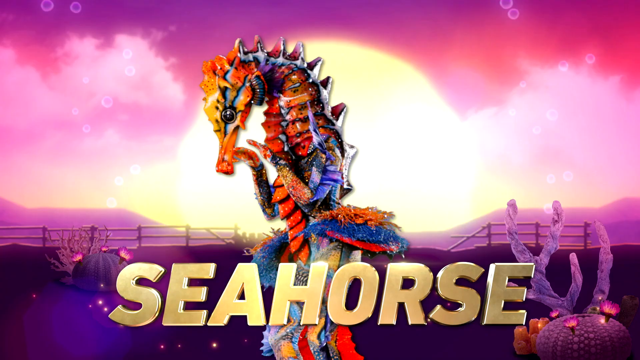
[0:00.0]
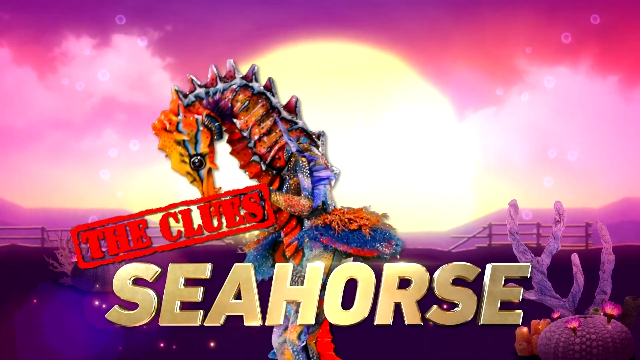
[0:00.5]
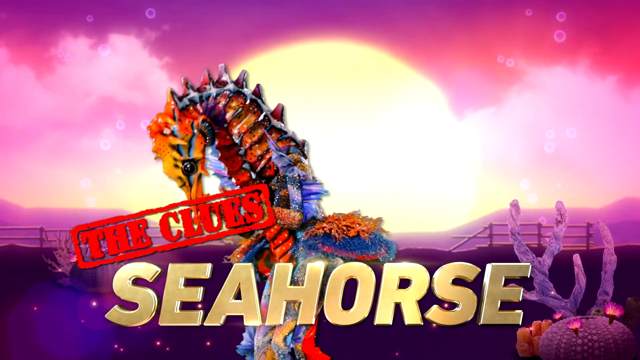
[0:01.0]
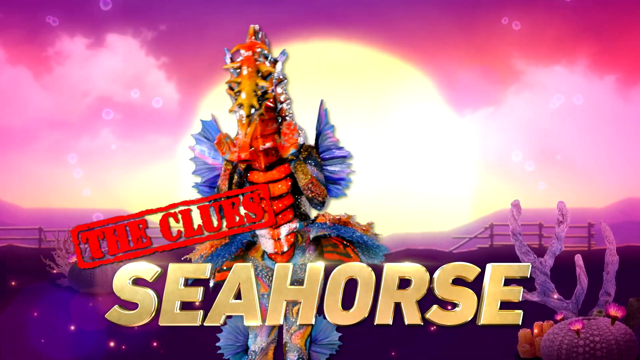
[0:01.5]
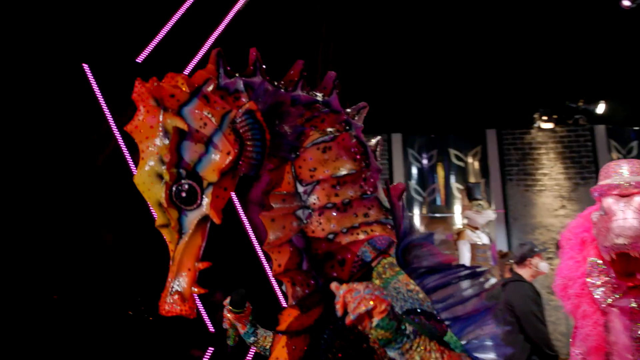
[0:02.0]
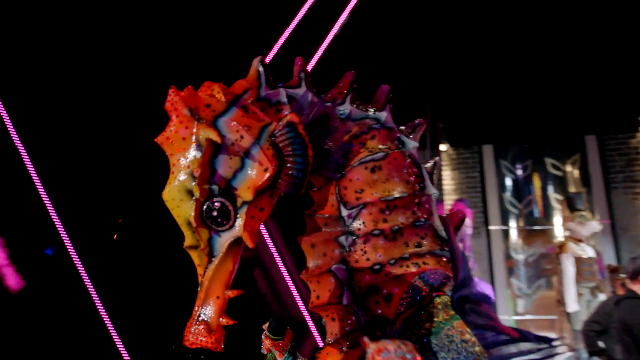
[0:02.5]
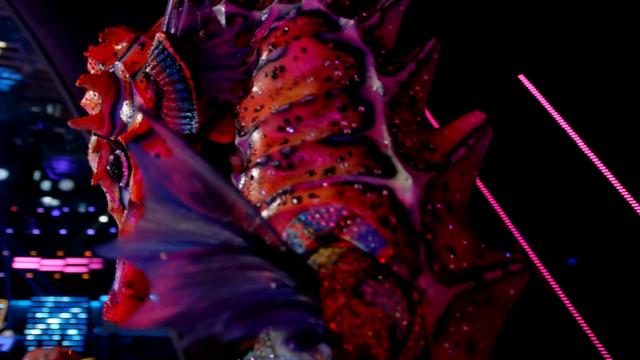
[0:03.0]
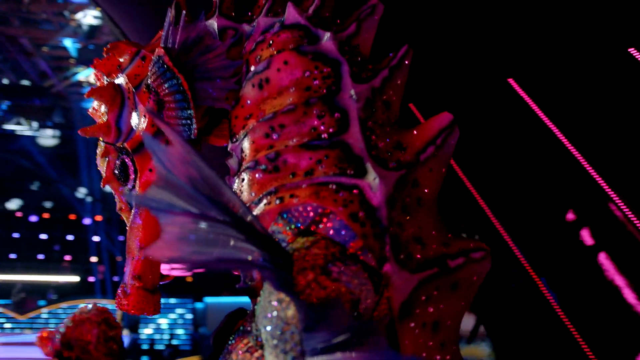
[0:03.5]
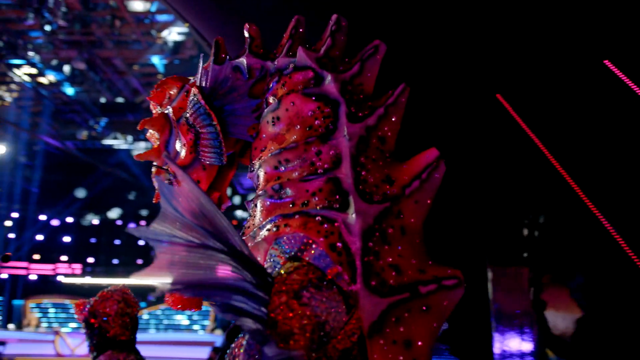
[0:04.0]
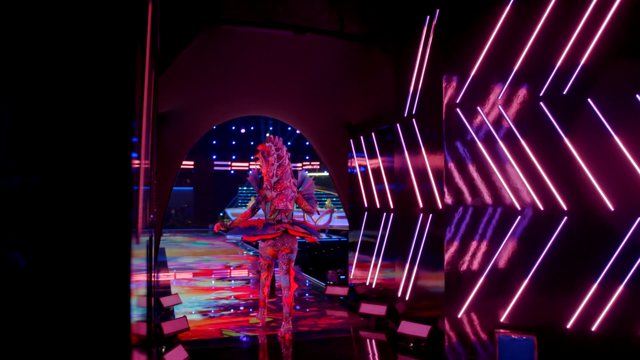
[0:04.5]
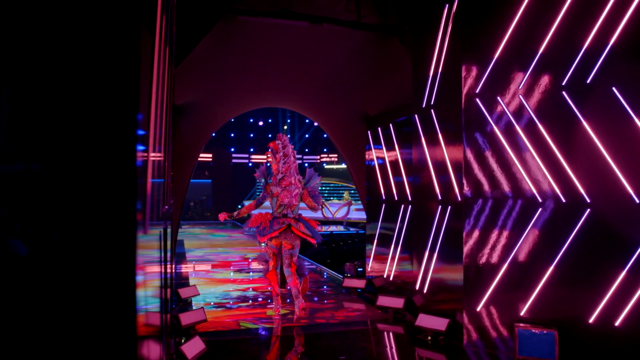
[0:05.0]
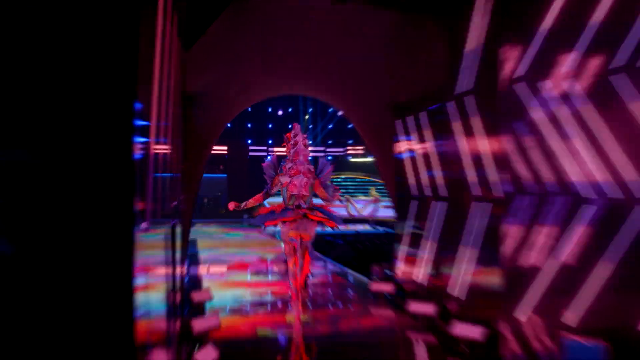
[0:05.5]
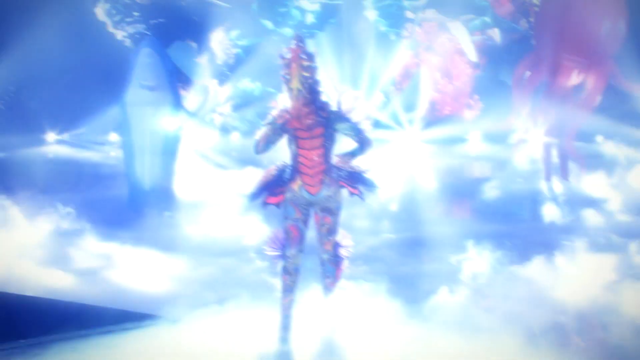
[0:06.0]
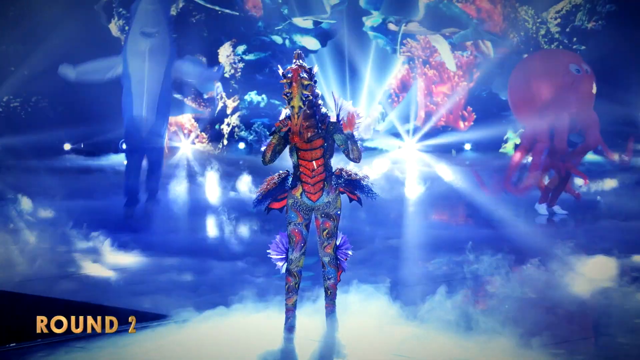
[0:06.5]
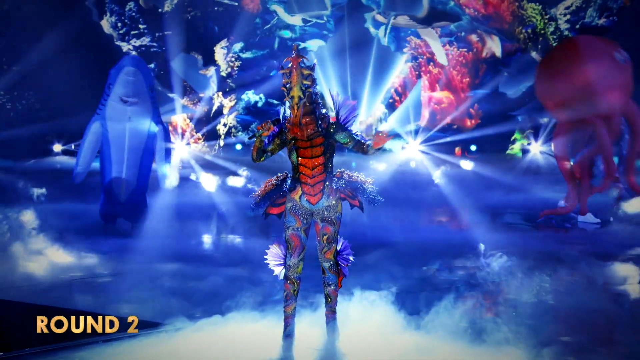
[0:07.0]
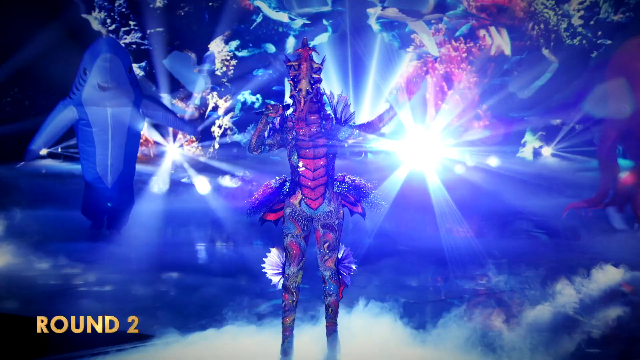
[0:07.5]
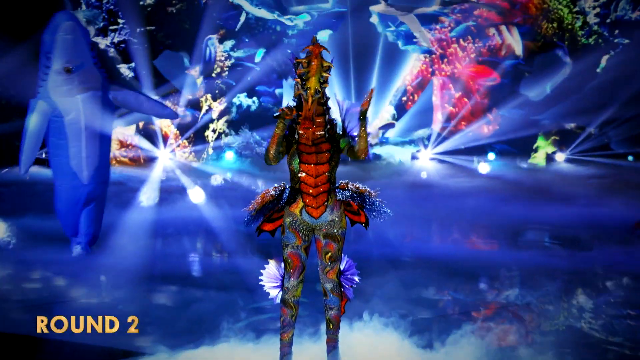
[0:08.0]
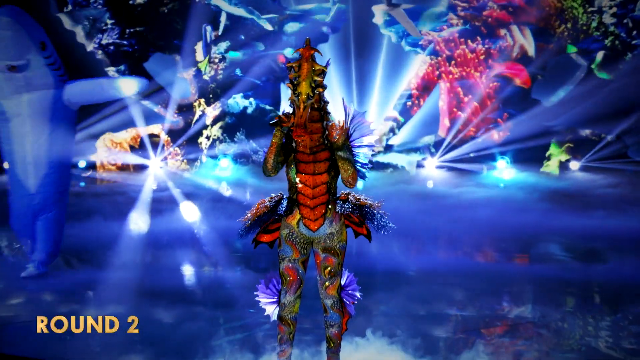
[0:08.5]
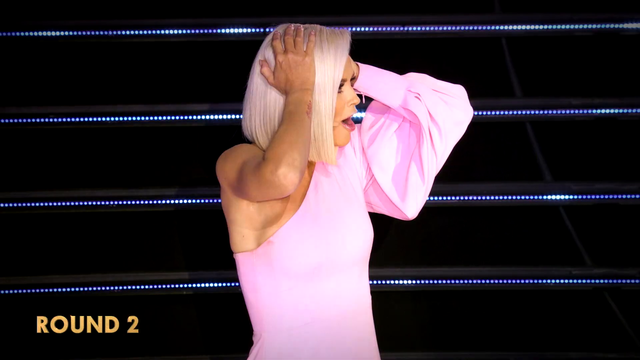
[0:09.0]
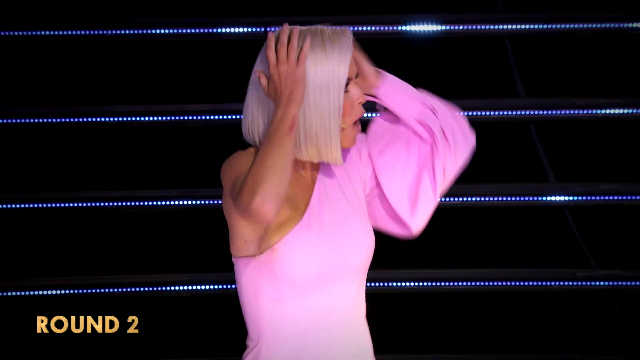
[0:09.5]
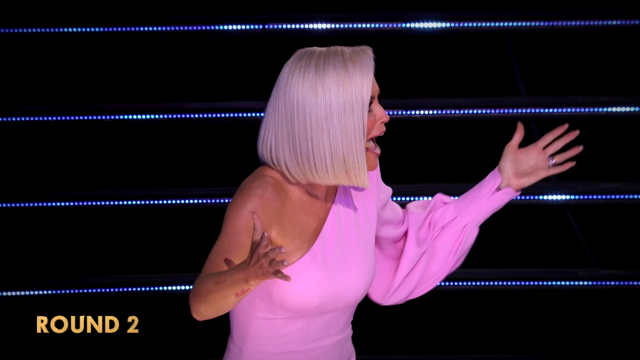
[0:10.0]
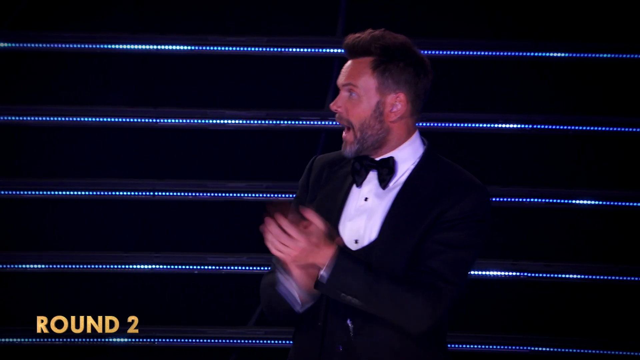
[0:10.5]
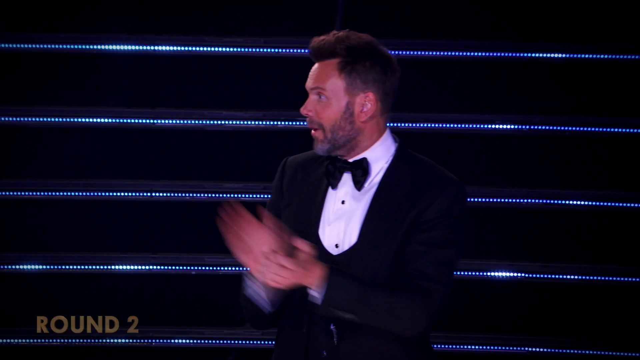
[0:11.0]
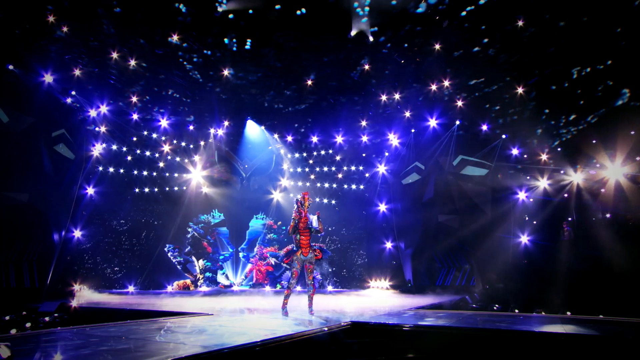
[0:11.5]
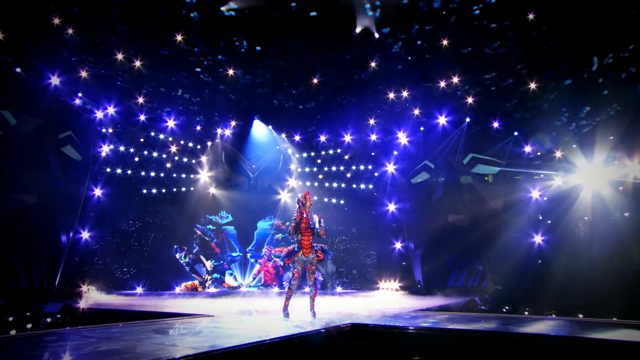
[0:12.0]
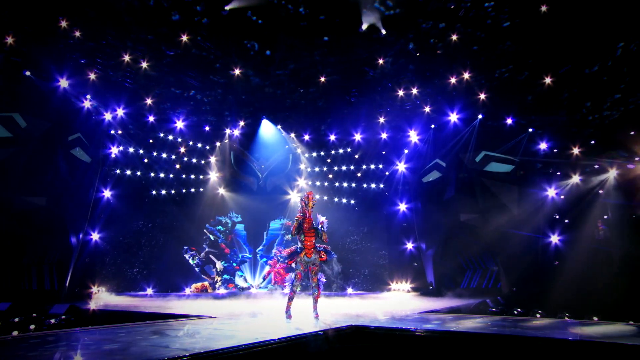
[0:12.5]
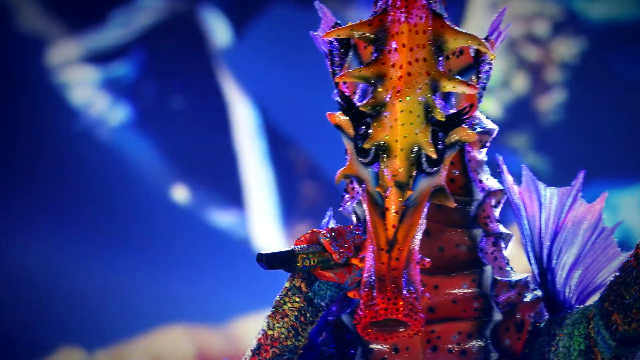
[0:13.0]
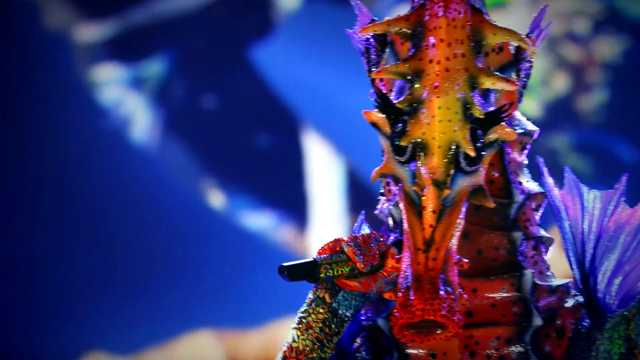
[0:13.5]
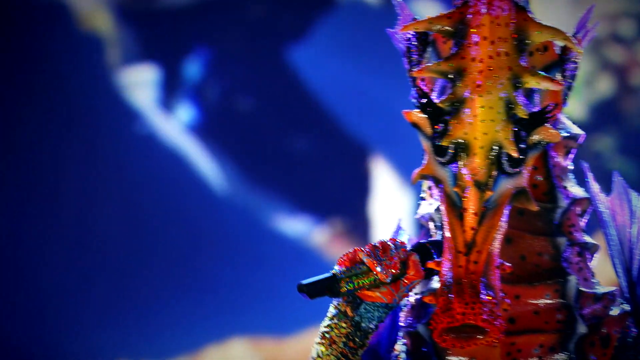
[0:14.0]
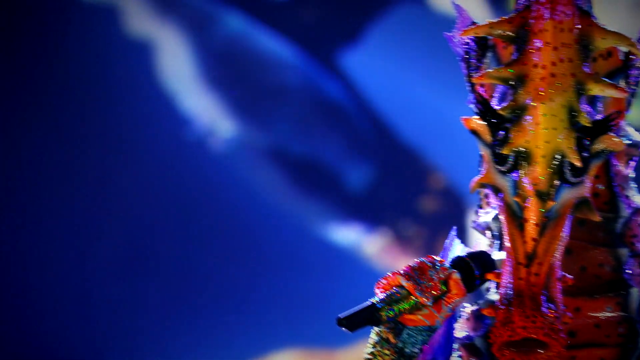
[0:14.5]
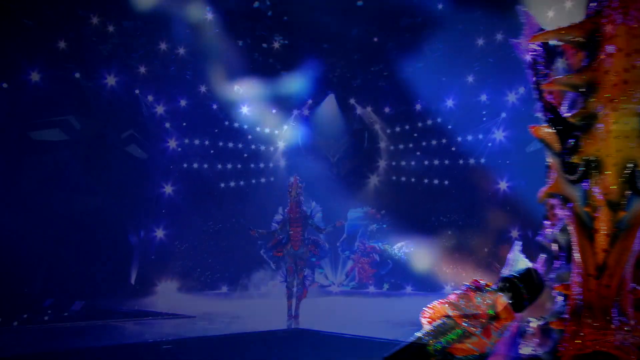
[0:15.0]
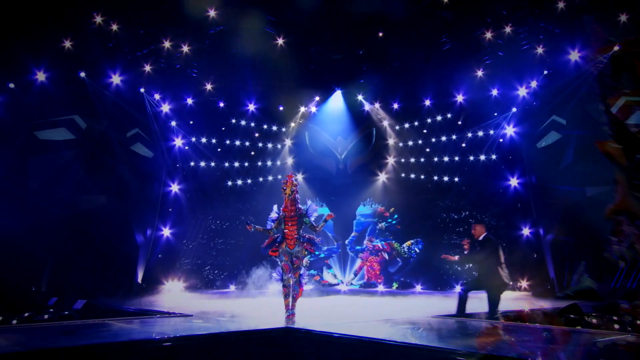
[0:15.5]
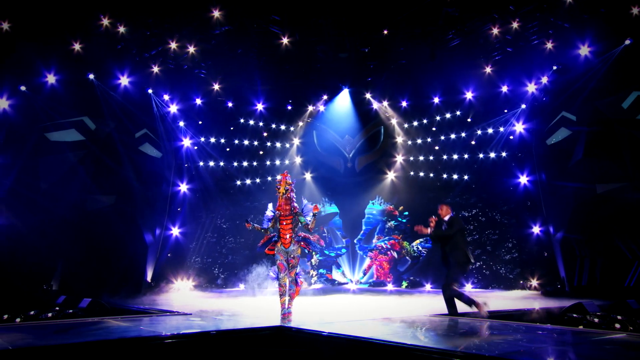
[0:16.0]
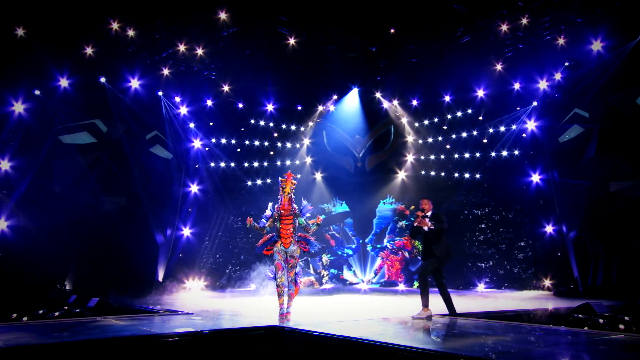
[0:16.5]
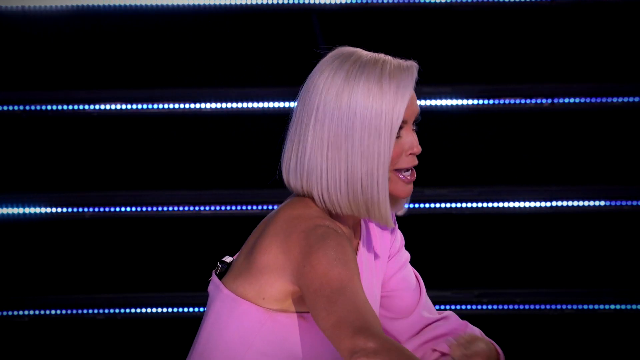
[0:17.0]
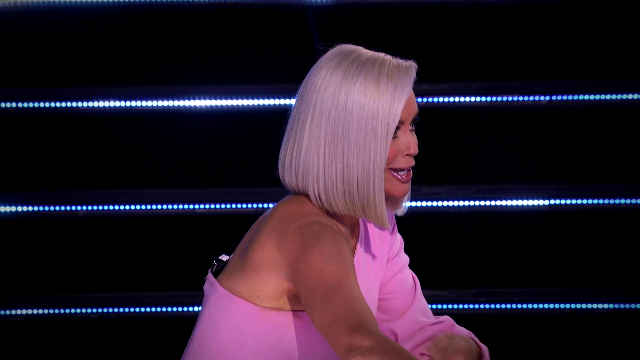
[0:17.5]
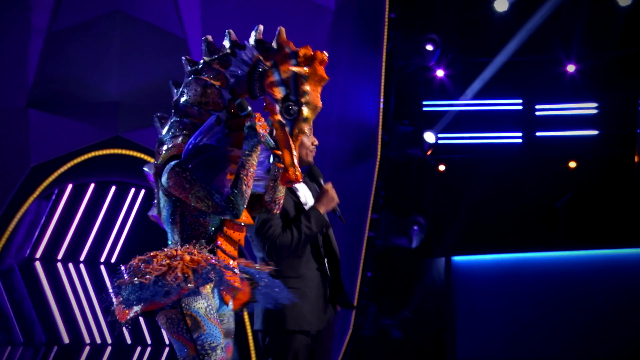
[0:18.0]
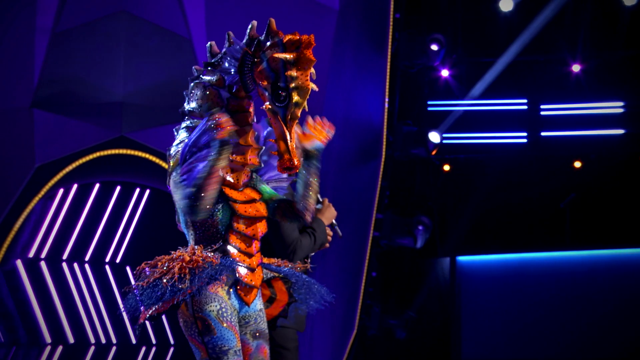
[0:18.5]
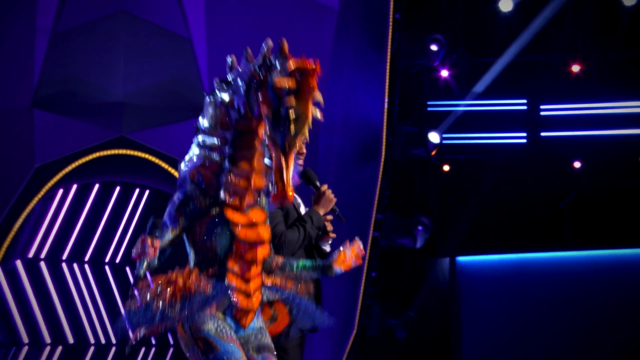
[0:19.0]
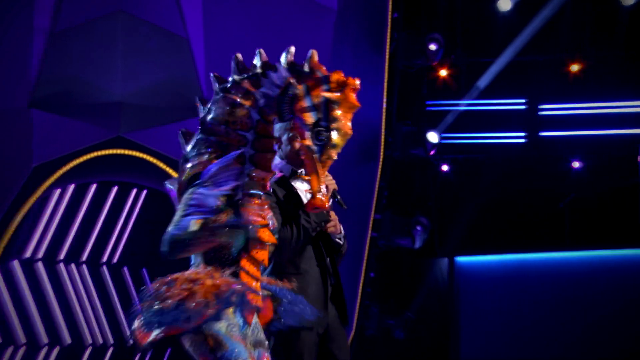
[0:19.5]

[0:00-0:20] The word "seahorse" is written on screen, and a seahorse is shown. It looks like a biomechanical seahorse in blue, red and orange, with some of its colours seeming silver, against a purple and pinkish background. The setting seems to be a horse stable or some kind of stable for animals. The fast-paced video then shows what looks like a person in a seahorse costume, in round two of some game. The person in the costume seems to be singing, and there are people behind or ahead of him. It looks like a show where people wear costumes to sing. A lady in a light pink dress with white hair holds her head, in amusement or apparently surprised by the singer's voice. They are wearing mics, and there is a man in a black tuxedo with a bow tie. There are lights behind the person who is singing.